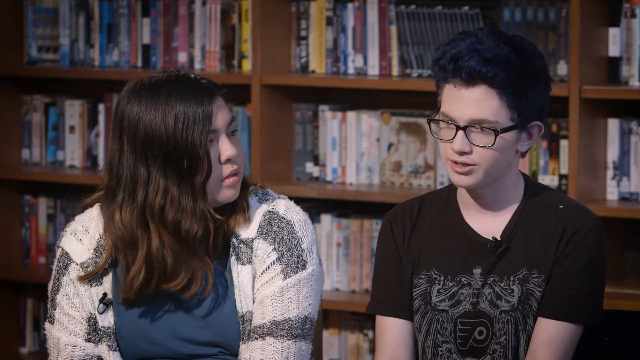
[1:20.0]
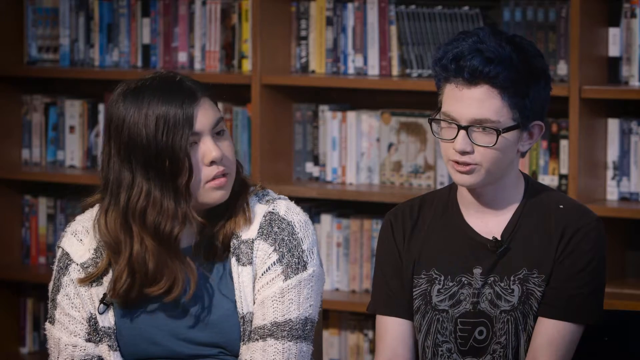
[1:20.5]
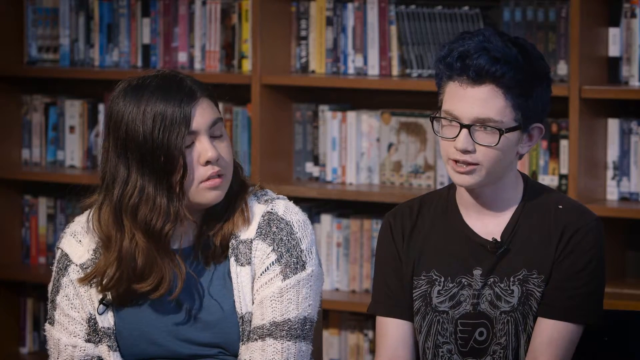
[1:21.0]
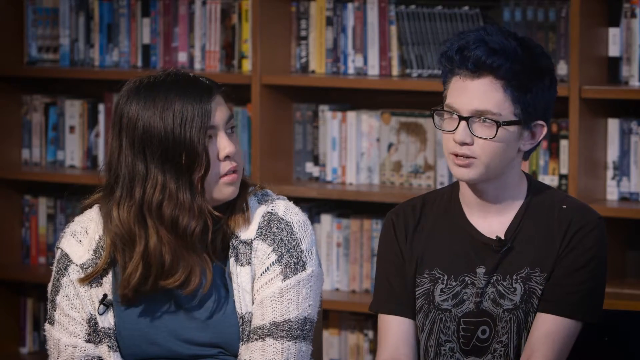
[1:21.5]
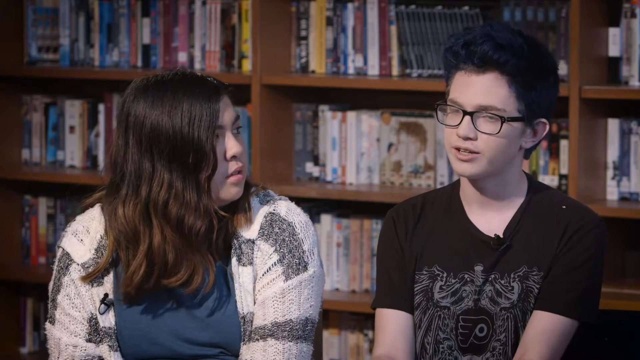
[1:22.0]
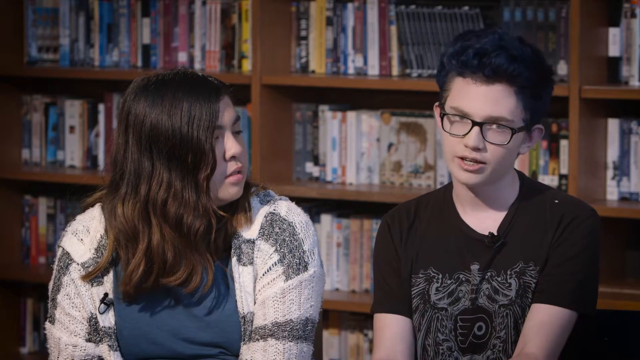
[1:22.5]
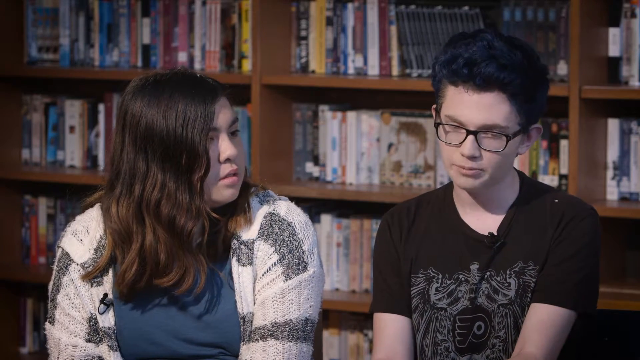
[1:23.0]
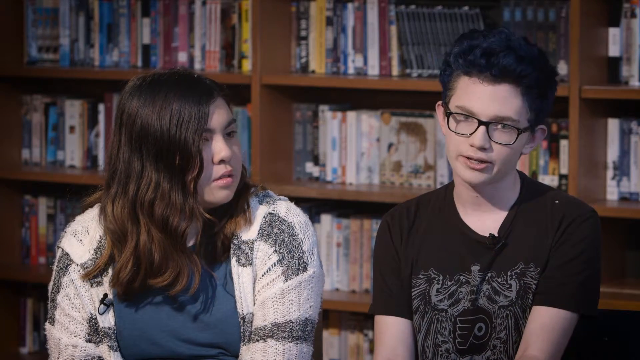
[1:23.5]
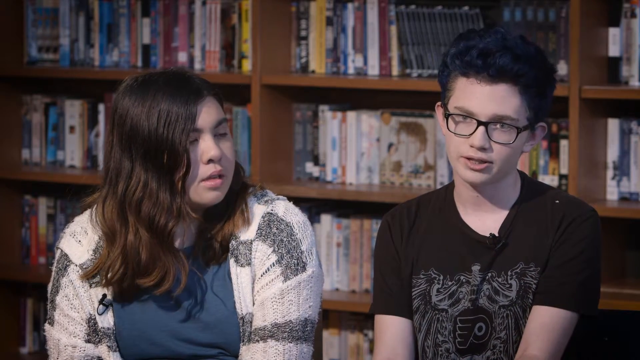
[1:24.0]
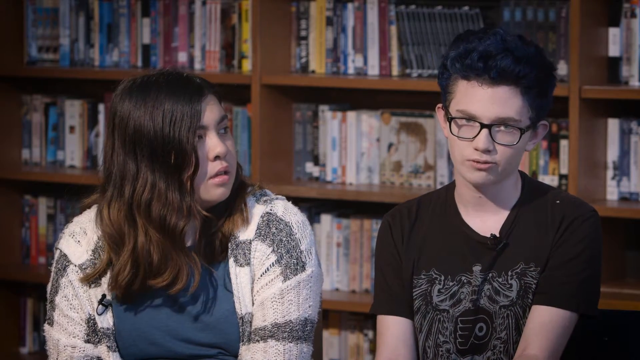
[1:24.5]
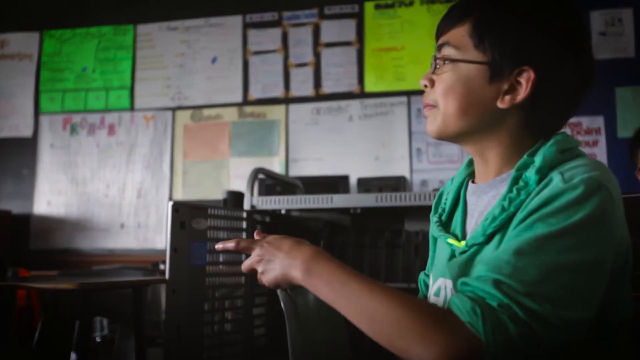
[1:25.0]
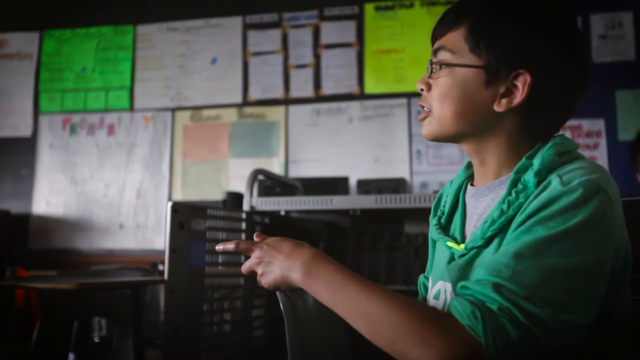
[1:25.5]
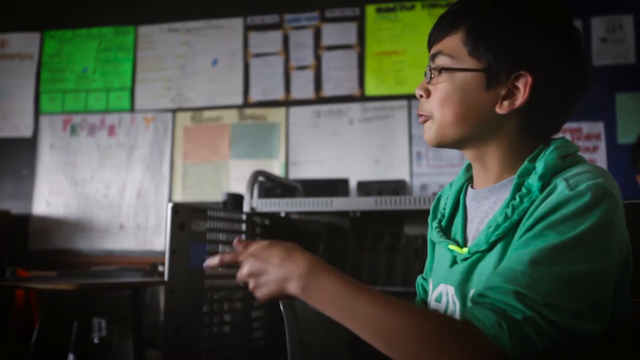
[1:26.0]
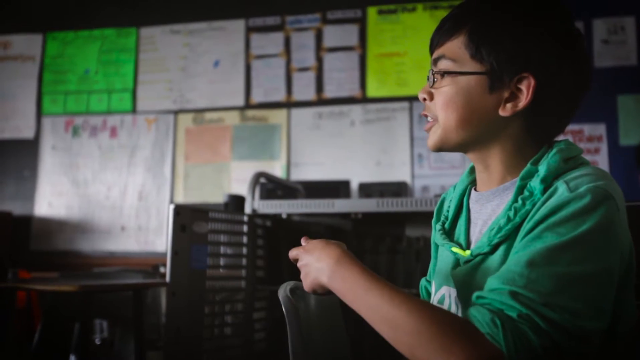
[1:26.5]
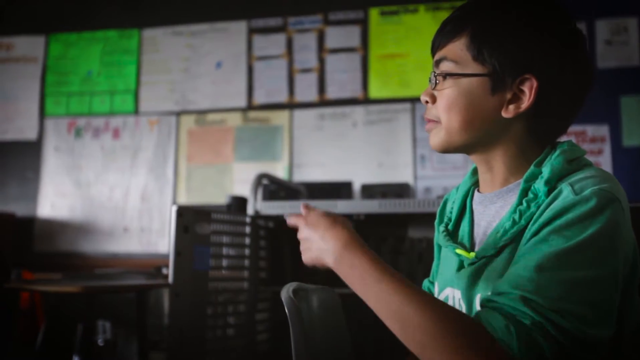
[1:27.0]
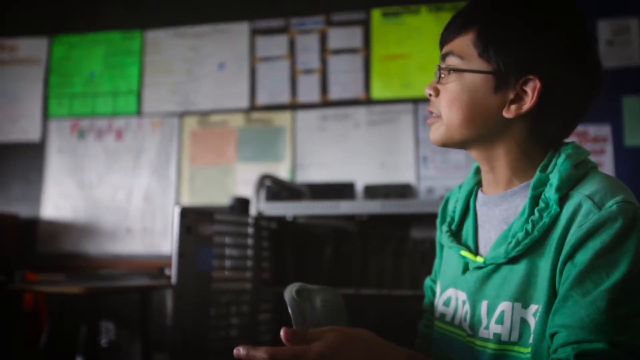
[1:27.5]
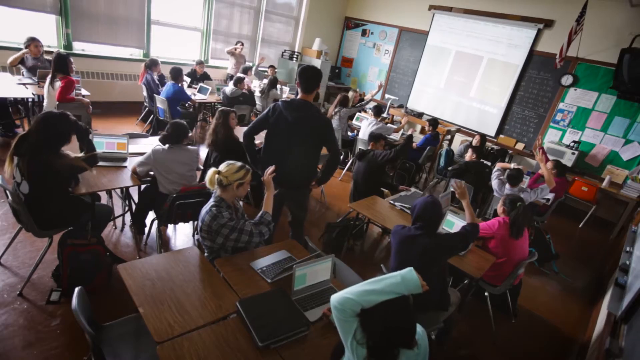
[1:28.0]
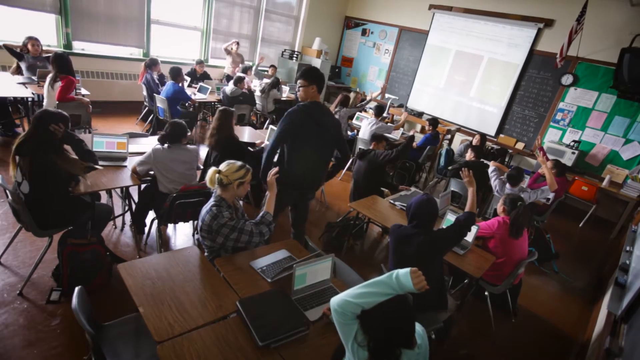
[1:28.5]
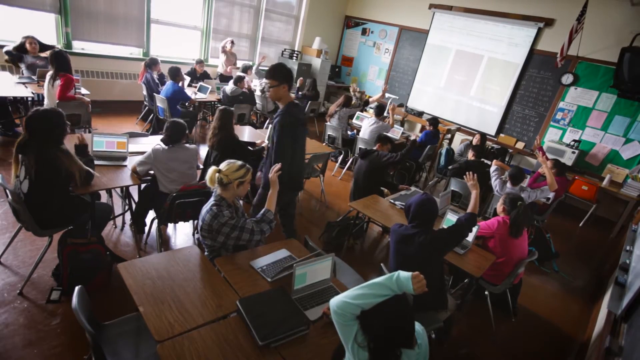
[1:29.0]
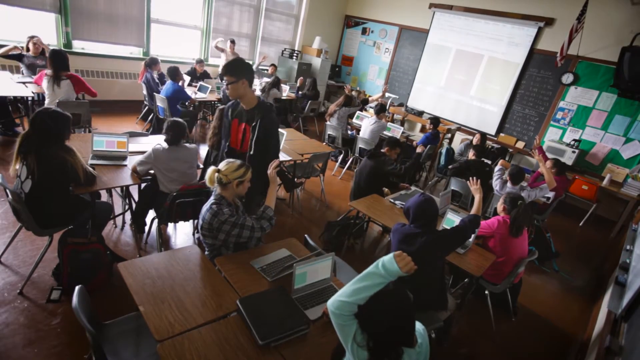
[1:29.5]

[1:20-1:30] The two young teenagers are being interviewed, and the boy with the black dyed hair and the Philadelphia Flyers t-shirt is the one talking. The view pans back to the classroom, where a teenager with glasses and a green hoodie points to something in the classroom and seems to be talking to the class and answering a question. A wider shot shows the whole classroom, with a projector showing a presentation. Some students raise their hands to ask a question. One teenager in the middle stares at the front of the classroom and then walks to the back. There seem to be lots of laptops, although some students don't seem to have any. There seem to be around 20 to 25 students in the classroom.